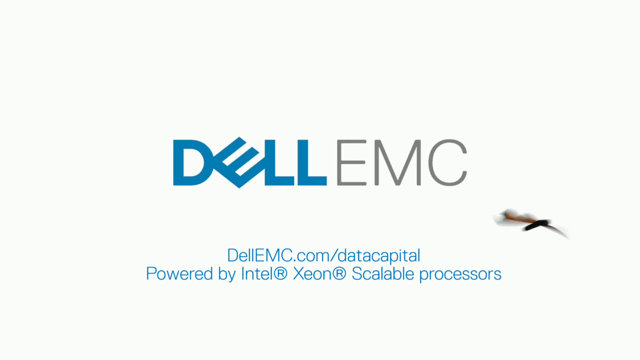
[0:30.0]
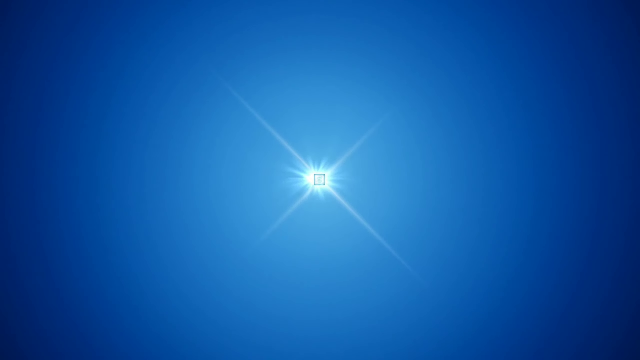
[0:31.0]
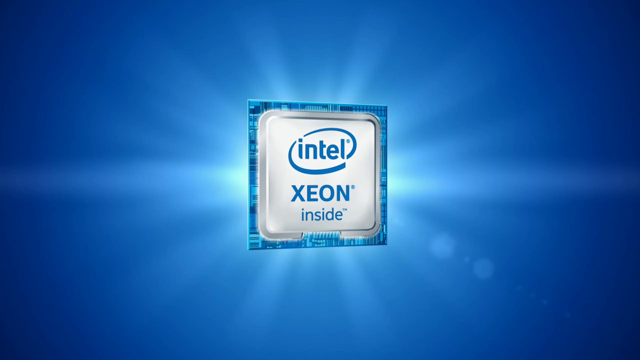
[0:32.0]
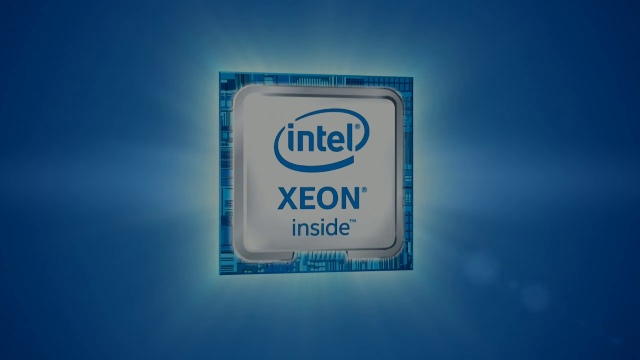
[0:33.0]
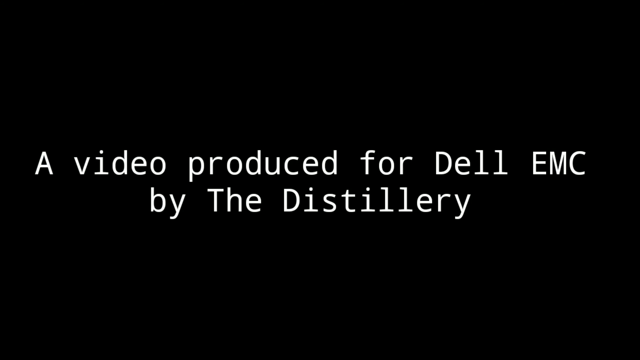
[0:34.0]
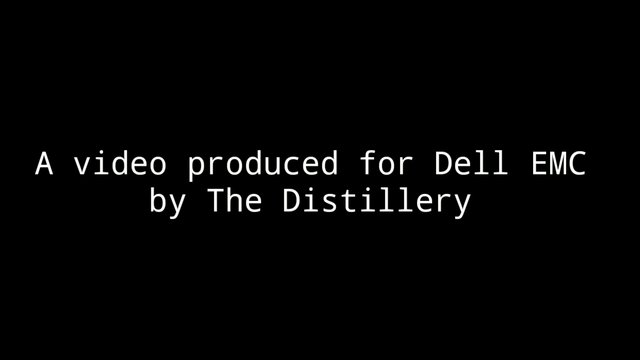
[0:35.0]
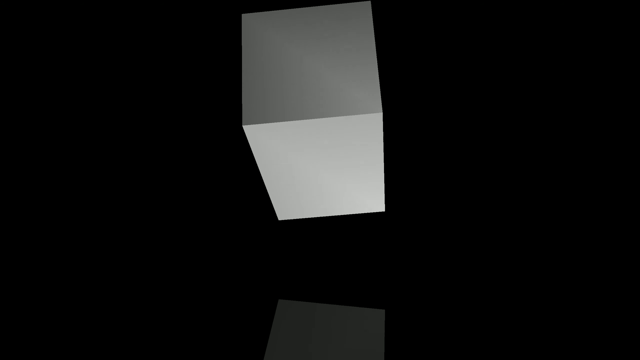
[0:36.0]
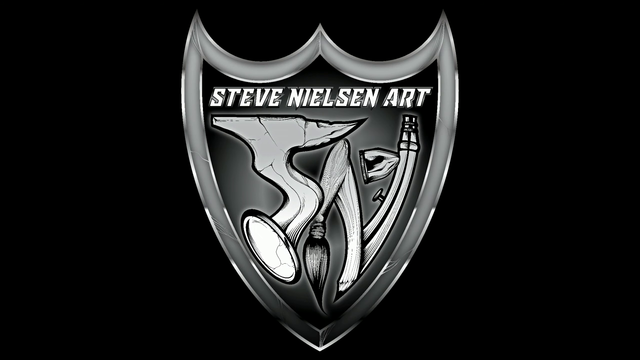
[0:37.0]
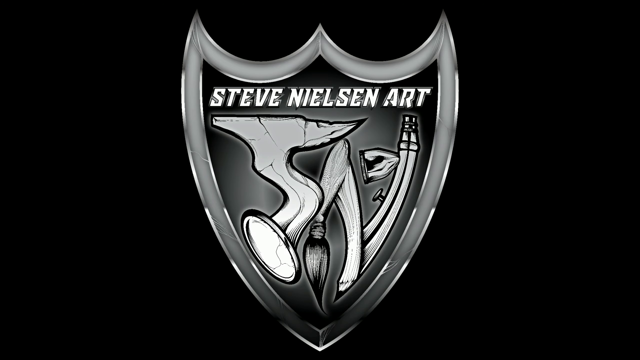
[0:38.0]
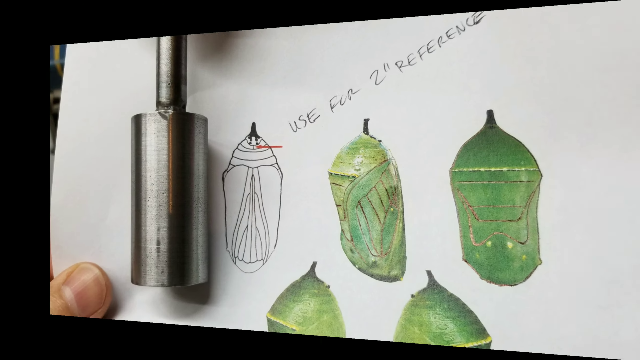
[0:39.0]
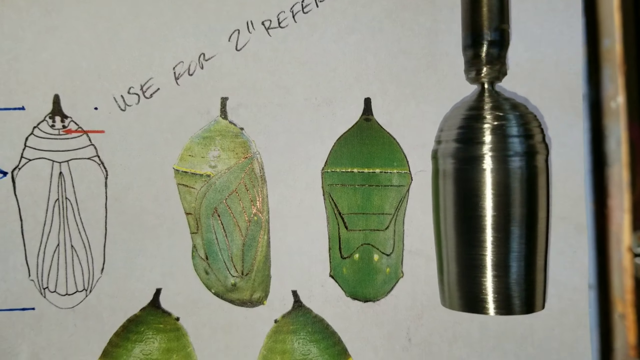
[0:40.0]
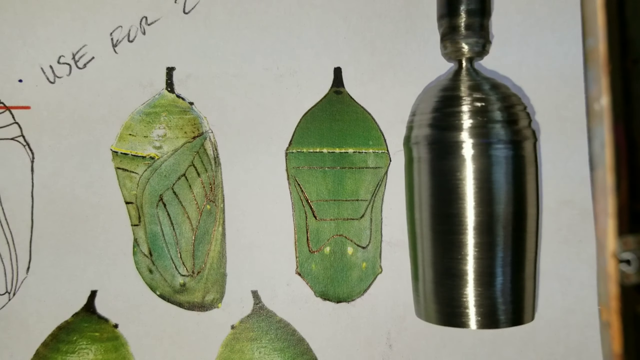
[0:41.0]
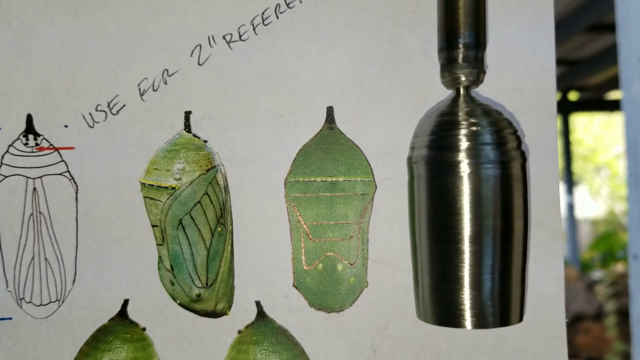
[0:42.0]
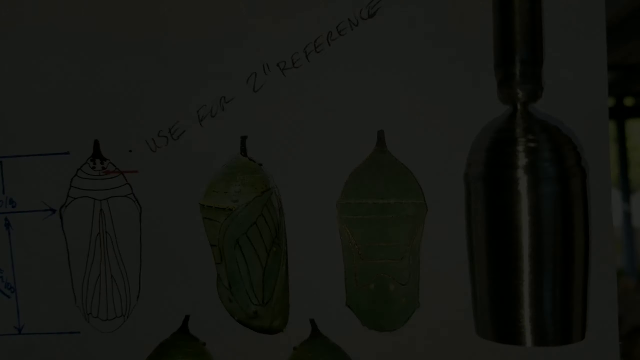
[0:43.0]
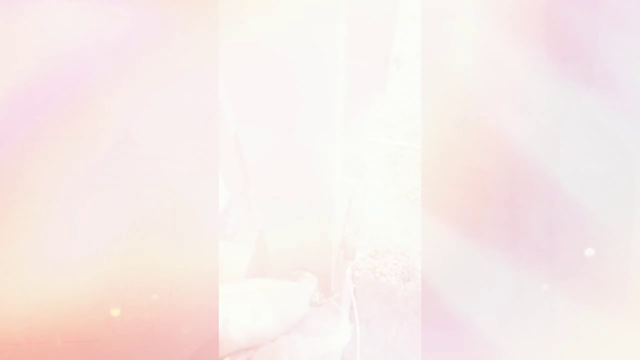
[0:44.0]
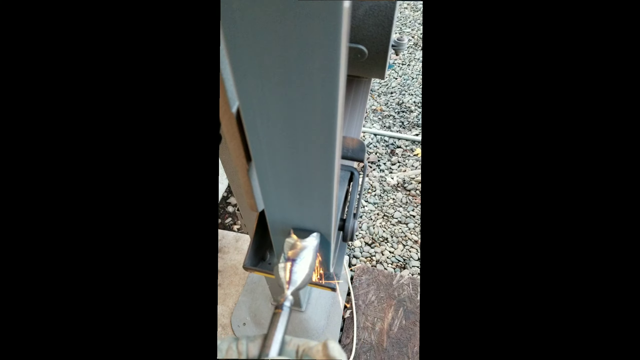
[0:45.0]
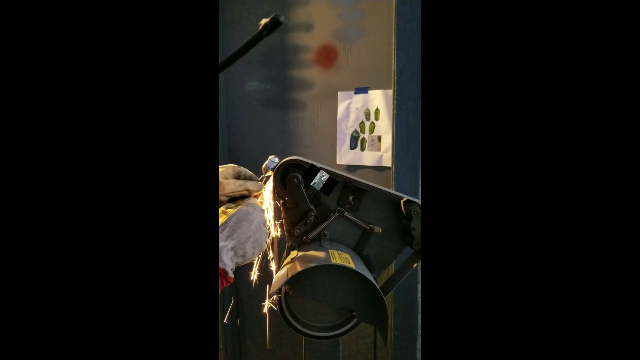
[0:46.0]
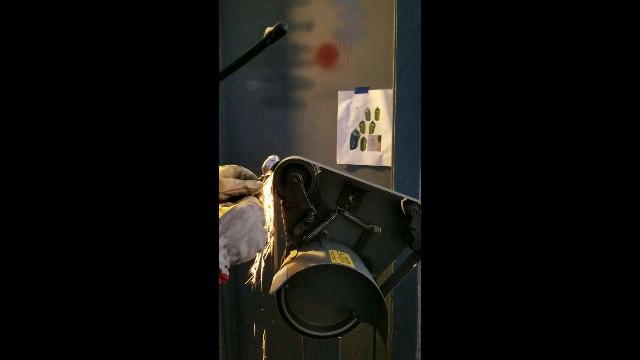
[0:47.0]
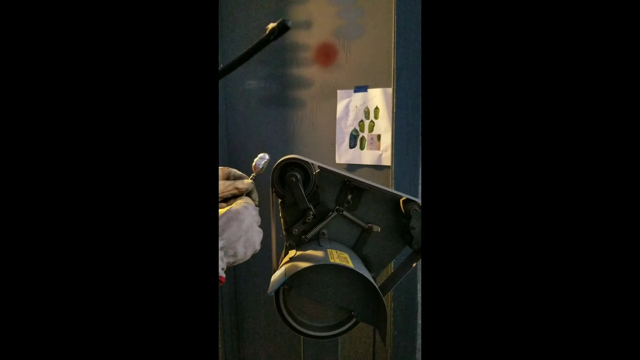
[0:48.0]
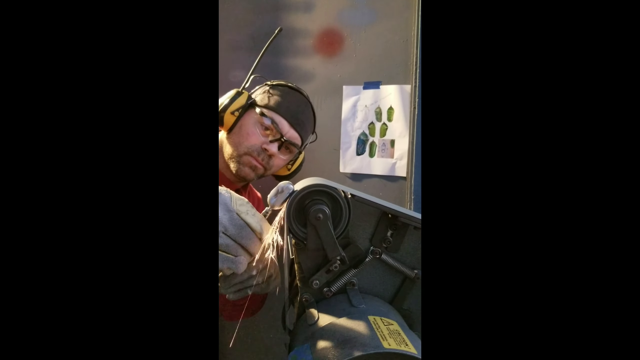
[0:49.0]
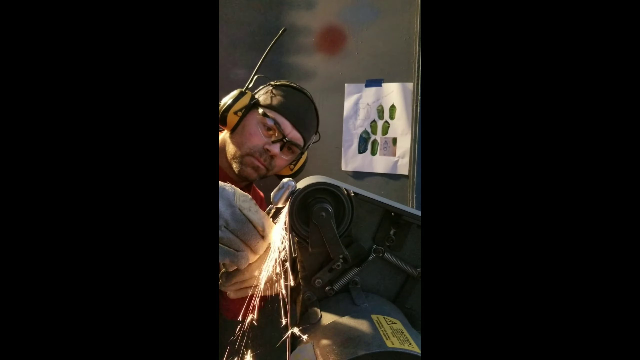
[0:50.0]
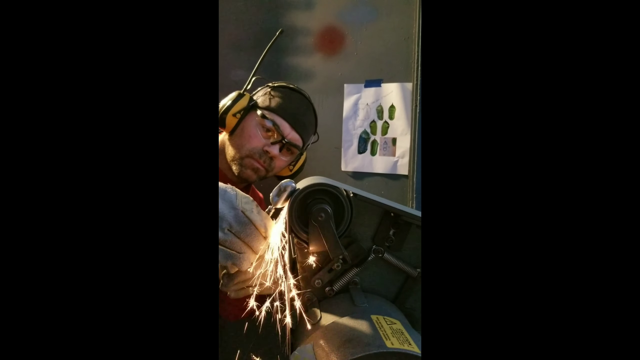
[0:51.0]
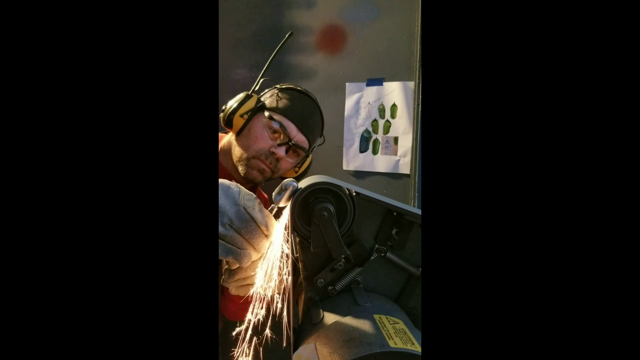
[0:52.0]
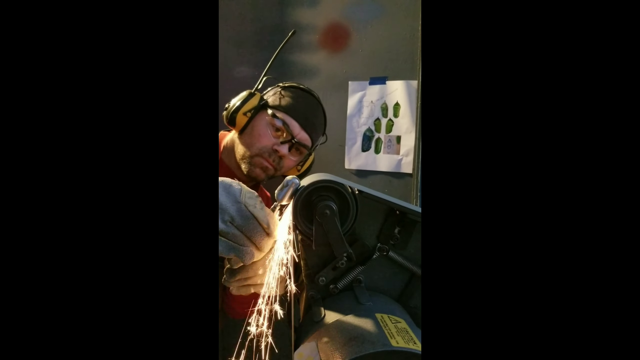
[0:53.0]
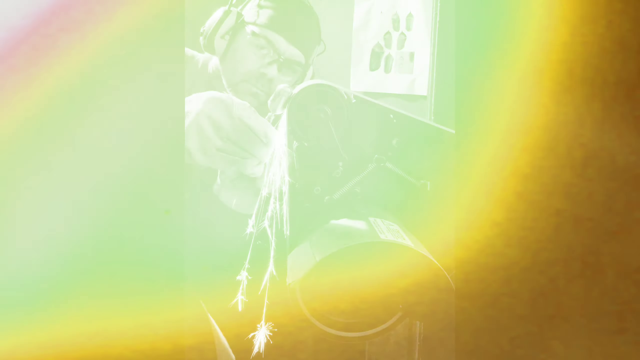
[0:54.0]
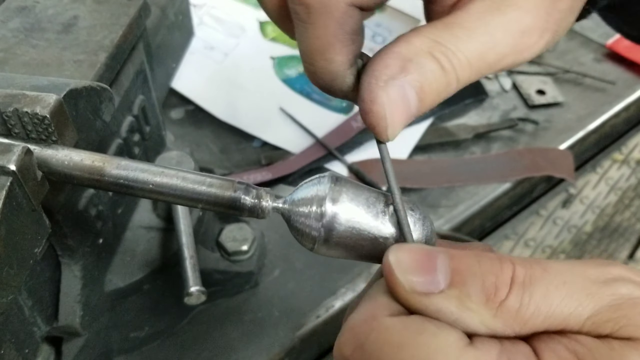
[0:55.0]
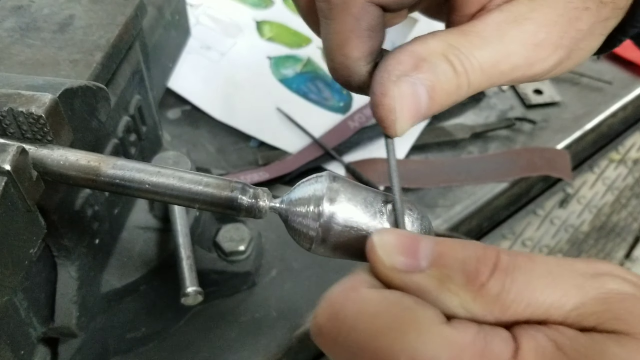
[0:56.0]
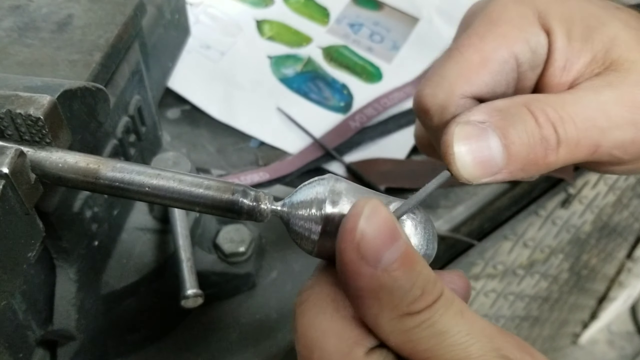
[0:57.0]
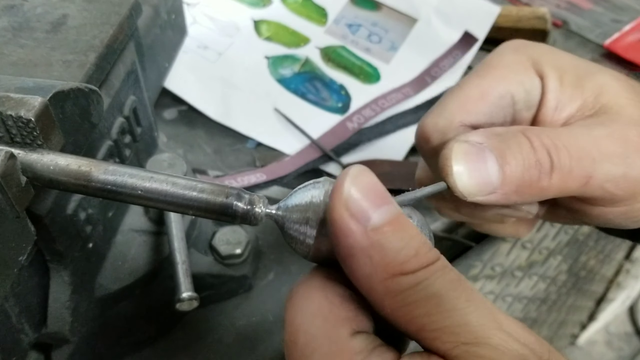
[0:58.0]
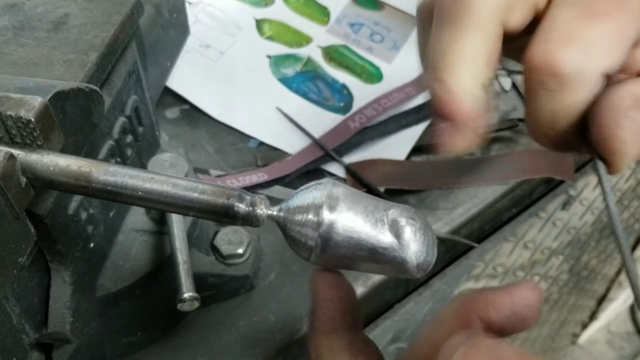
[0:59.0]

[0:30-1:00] A white background appears with "Dell EMC" in the center, and at the bottom the text "Dell EMC.com/data capital powered by Intel Xeon Scalable processors." On the right side, what looks like a dragonfly flies off to the right and out of the frame. The scene cuts to a blue screen where a blue and white flash of light appears in the center and an Intel Xeon chip pops up, moving forward, back and forward again. The screen then changes to a black background with white text in the center reading "a video produced by Dell EMC by the distillery," which stays for a few seconds. Another black background follows, and a cube or box pops into the middle, jumps around and zooms in, showing "a Steve Nielsen art" and the same shield logo. The shield zooms in a bit and turns toward the right, and once it turns an image pops up and stops. A clip then plays of what looks like artwork, a drawing of what appear to be green cocoons.